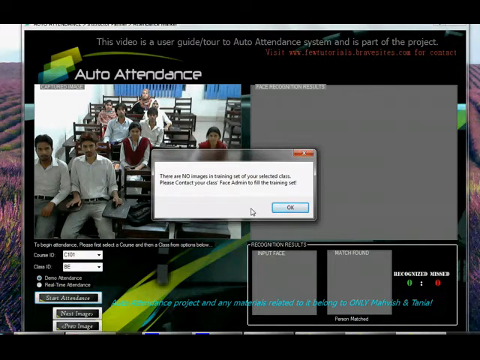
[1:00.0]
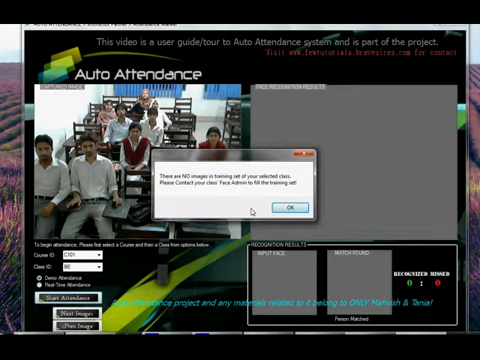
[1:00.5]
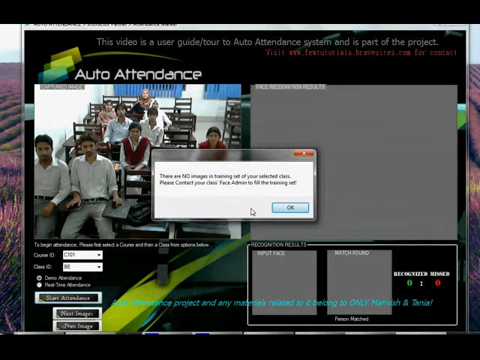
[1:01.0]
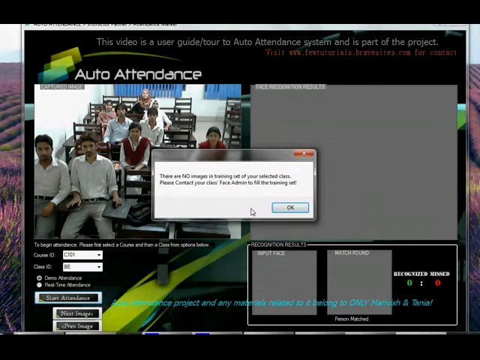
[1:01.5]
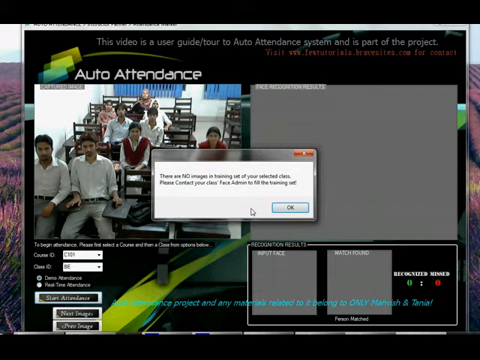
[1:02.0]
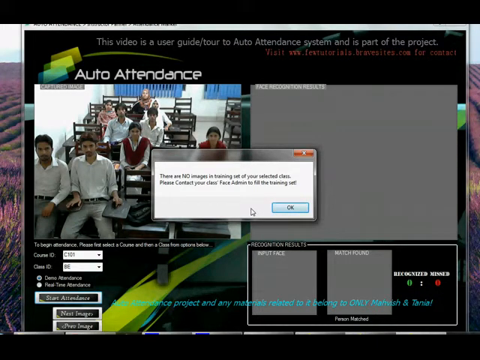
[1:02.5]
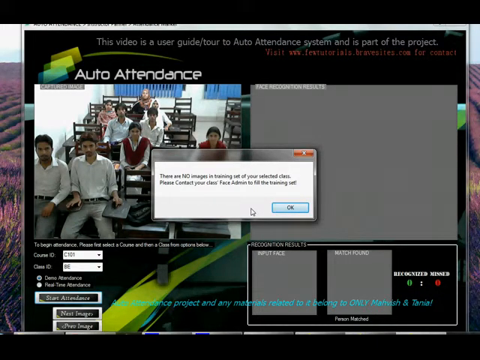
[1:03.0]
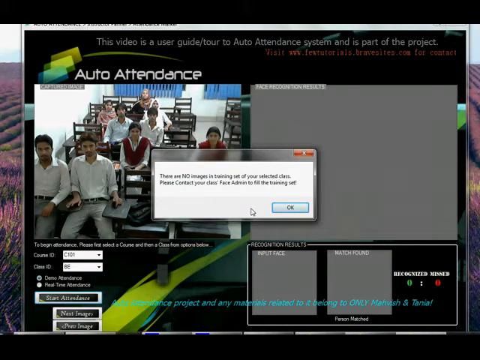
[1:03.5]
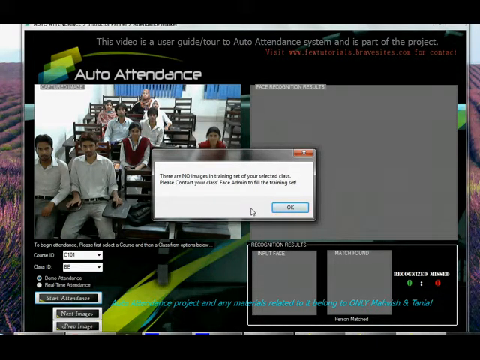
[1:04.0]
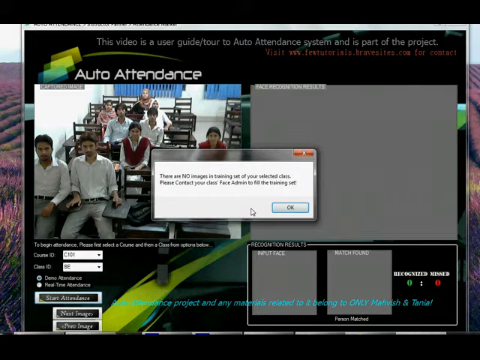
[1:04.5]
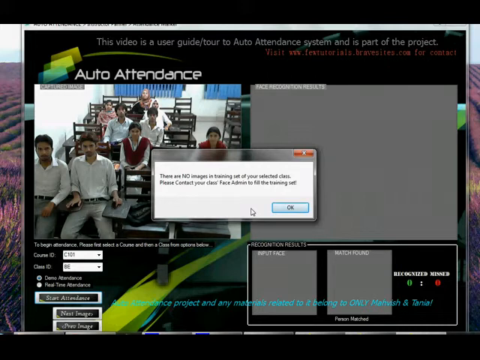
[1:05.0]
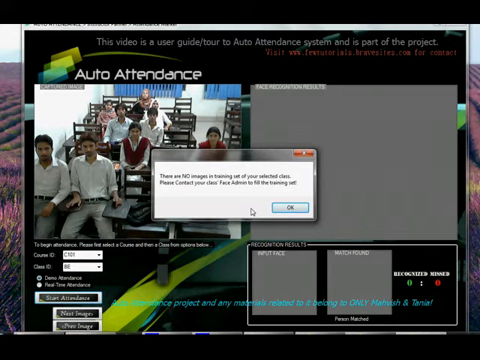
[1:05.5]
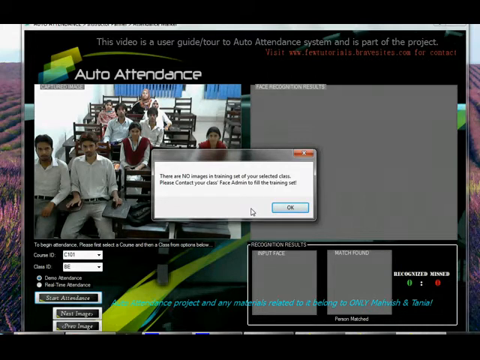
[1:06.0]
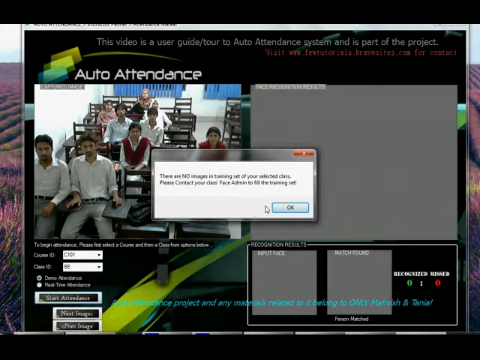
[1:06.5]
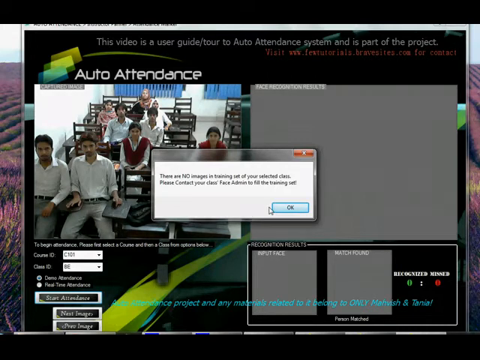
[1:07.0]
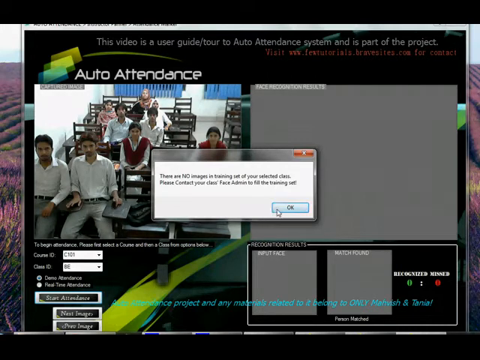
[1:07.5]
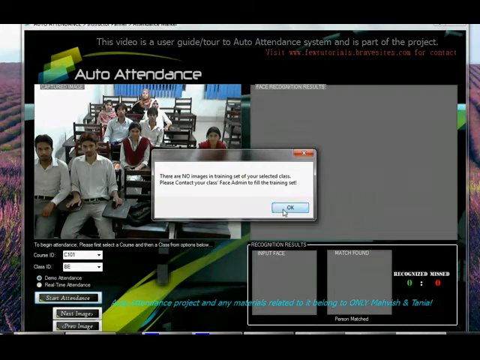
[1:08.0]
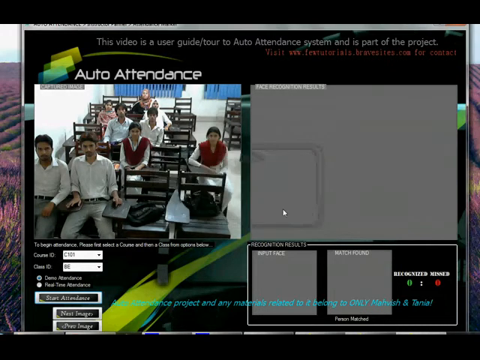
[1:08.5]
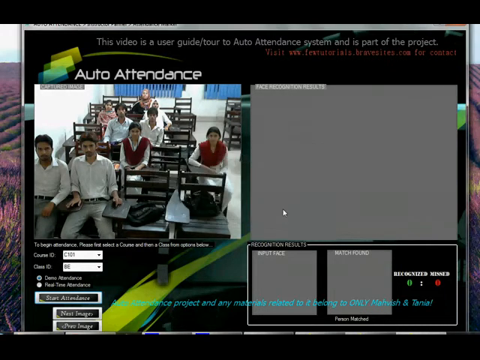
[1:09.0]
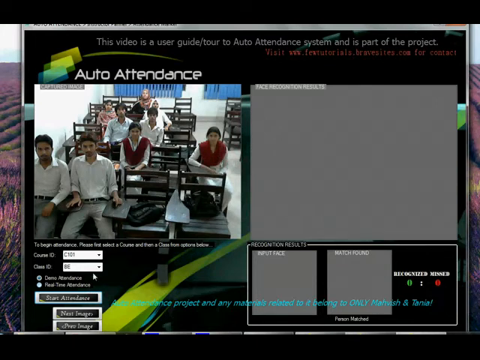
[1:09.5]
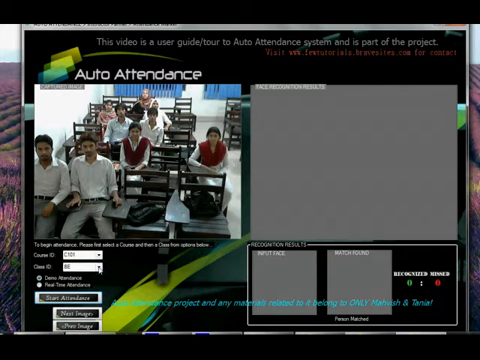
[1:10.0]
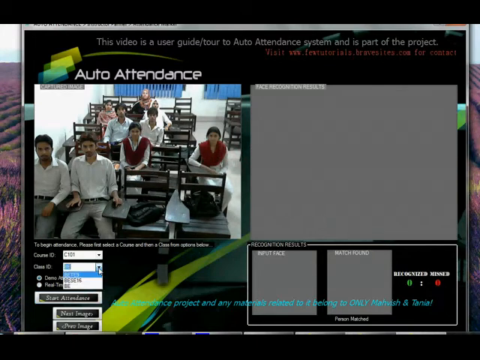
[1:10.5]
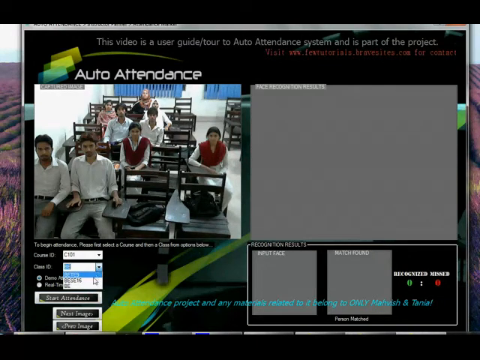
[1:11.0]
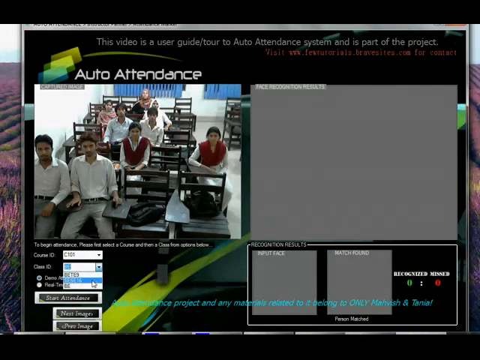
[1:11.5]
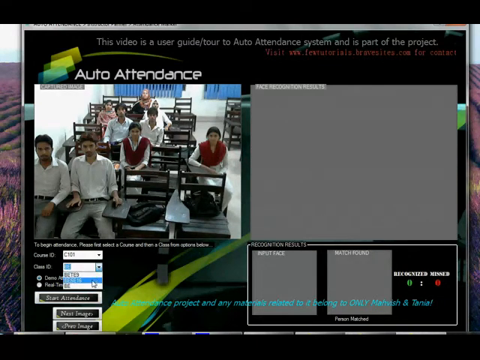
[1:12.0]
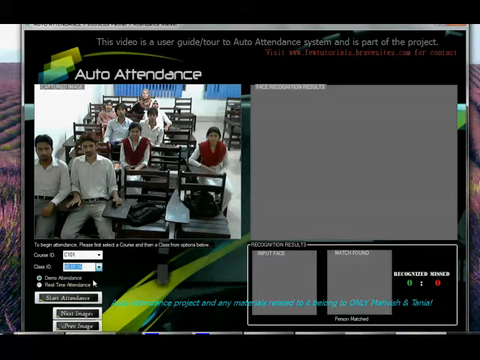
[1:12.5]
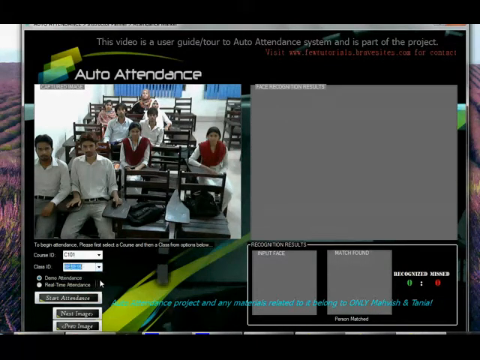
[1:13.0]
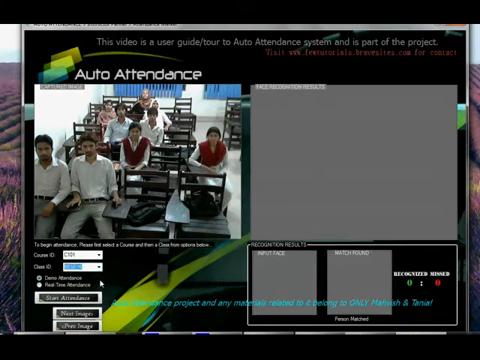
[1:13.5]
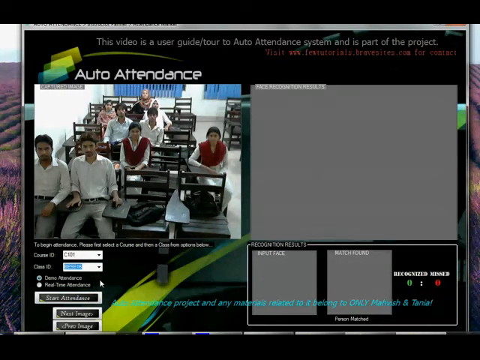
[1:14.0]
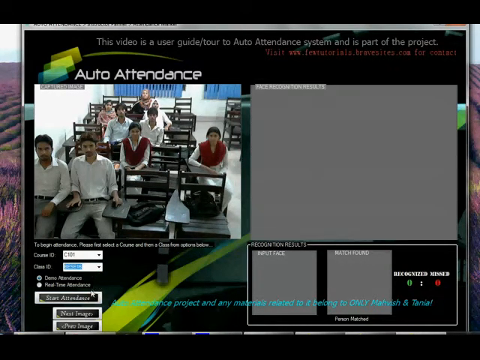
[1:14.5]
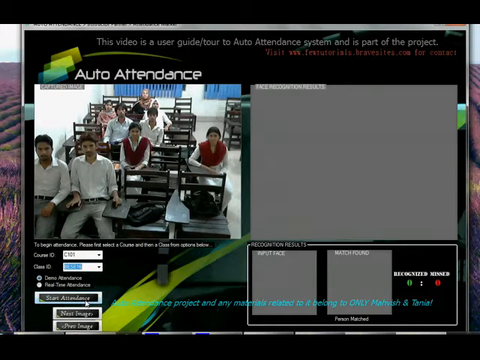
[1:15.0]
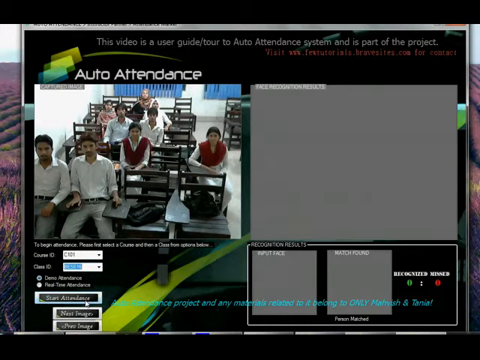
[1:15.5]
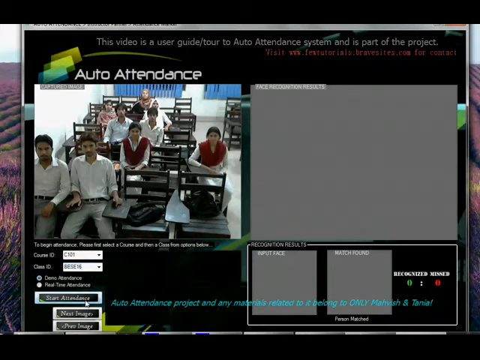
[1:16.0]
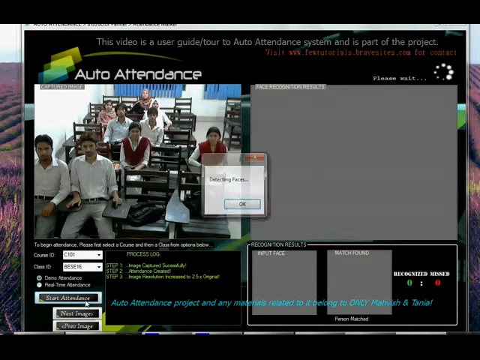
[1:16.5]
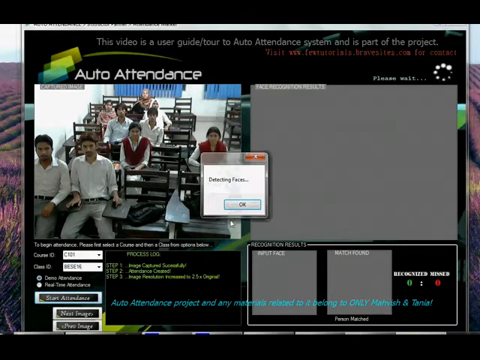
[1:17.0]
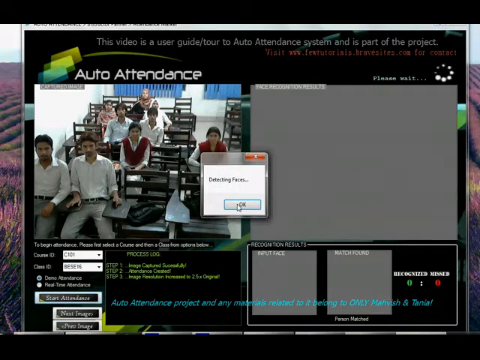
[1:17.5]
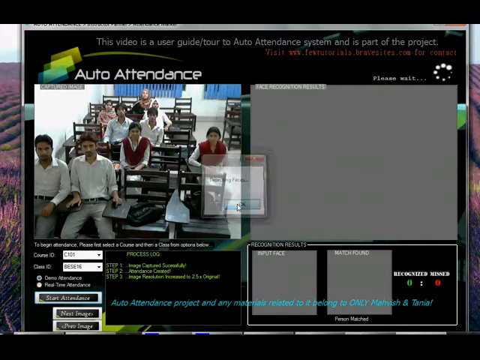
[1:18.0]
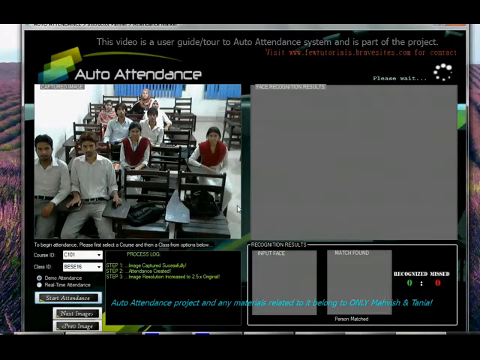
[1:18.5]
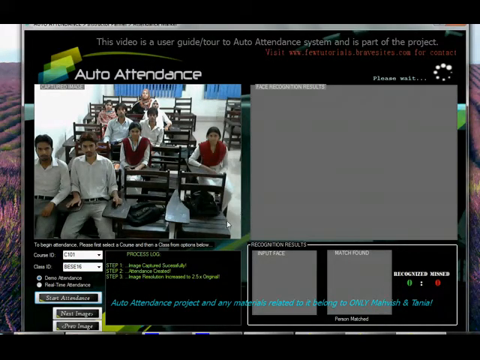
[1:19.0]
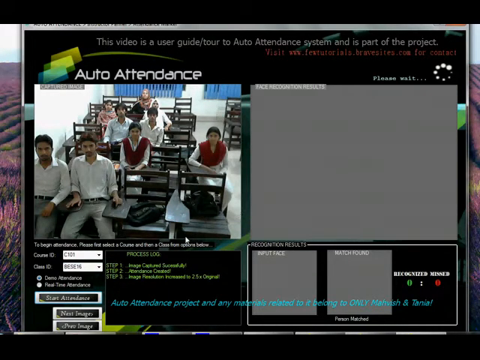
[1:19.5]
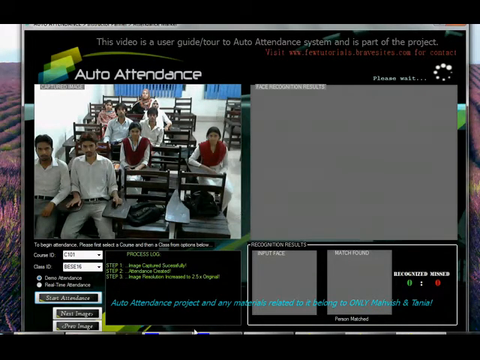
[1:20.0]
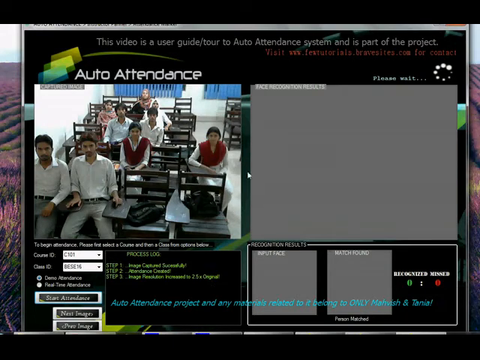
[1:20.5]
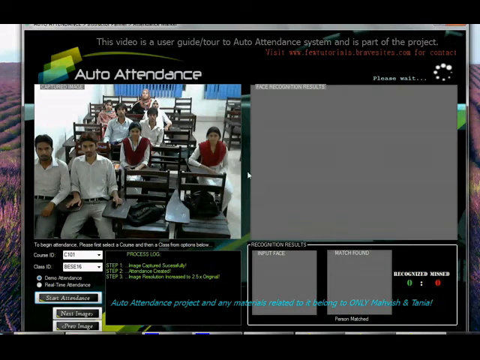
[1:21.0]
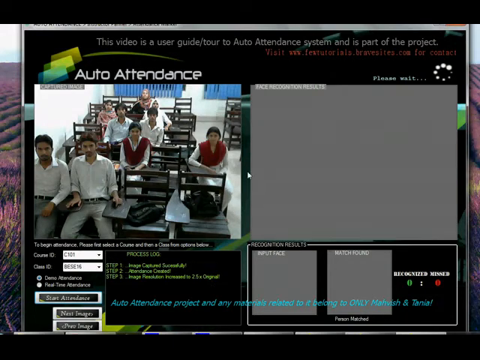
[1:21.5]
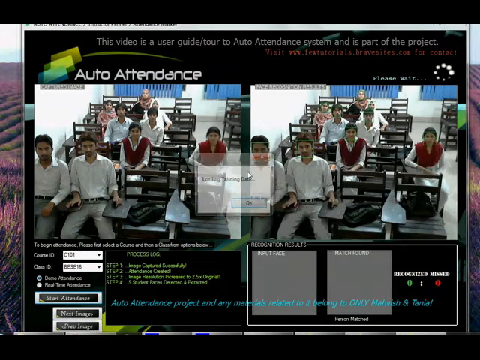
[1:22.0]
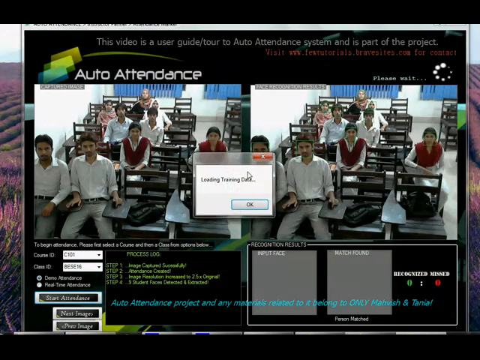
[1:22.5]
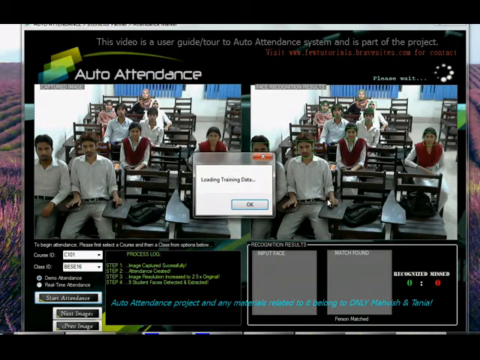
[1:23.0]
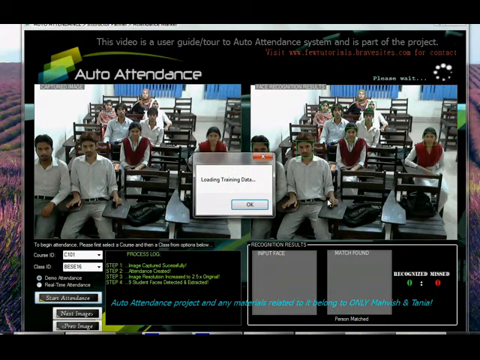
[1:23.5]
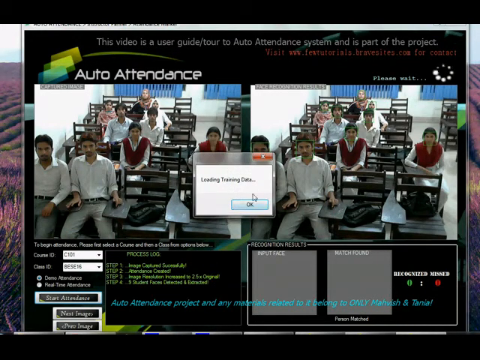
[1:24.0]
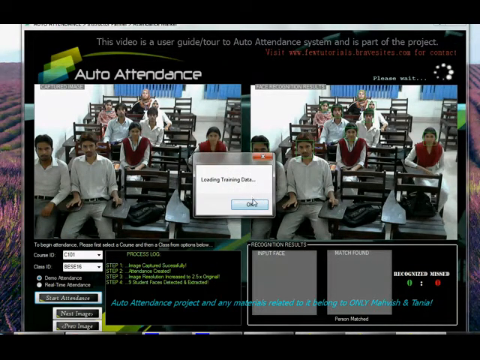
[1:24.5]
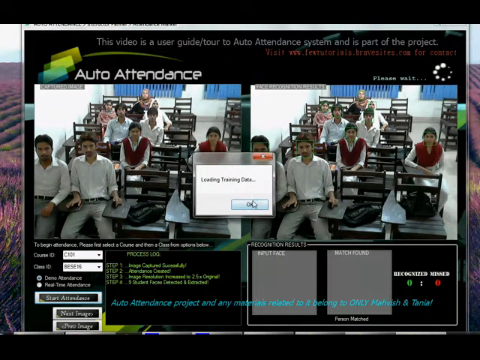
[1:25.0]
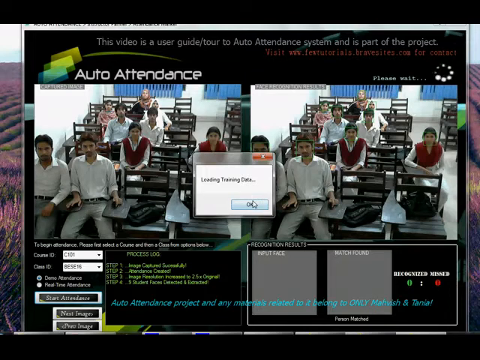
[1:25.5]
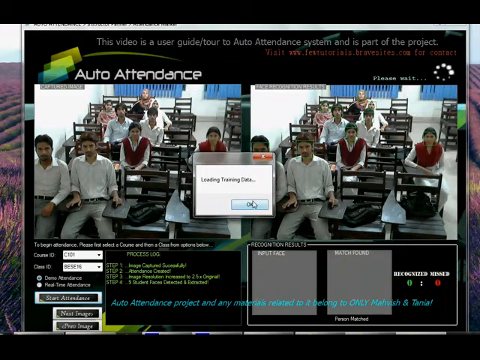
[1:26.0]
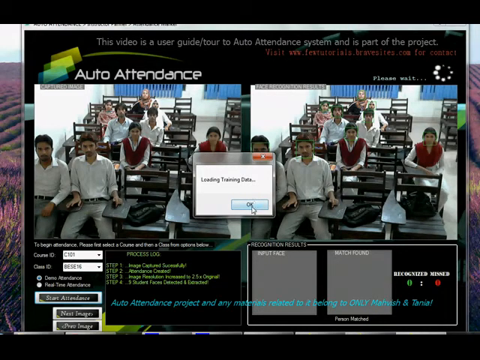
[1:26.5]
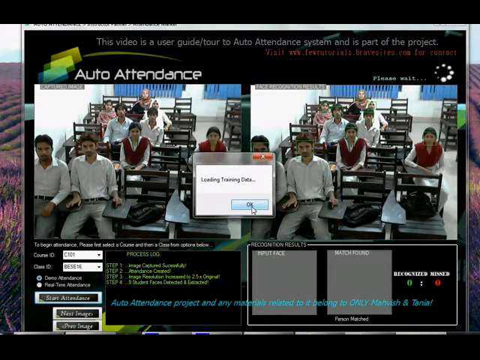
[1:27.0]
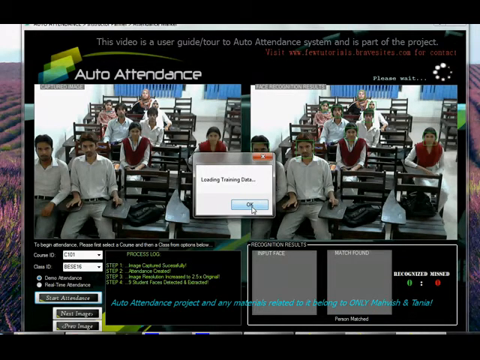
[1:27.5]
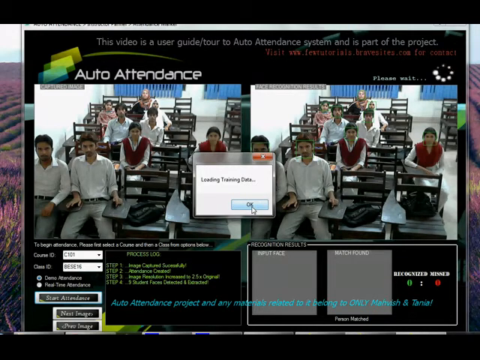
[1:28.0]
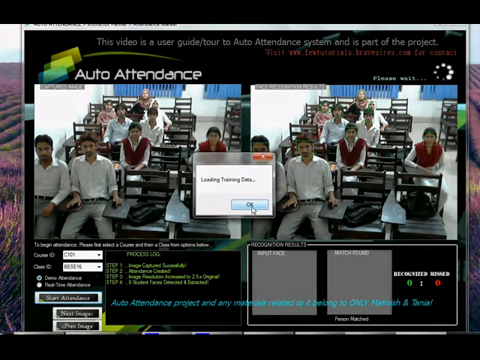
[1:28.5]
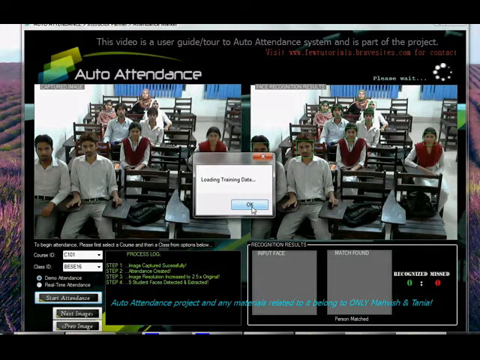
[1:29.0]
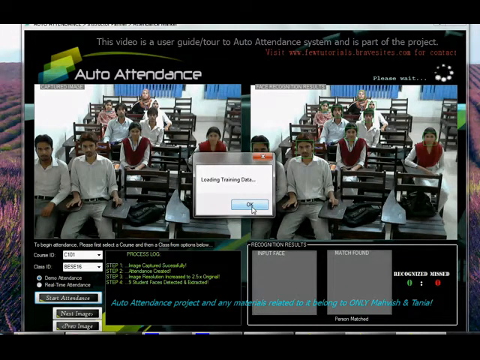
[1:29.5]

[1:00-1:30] The pop-up saying there are no images is still on the screen, and there looks to be an image on one side. He moves up to the OK button and clicks it, then goes back to what seem to be IDs, selecting certain numbers from the box. He goes down to "start attendance" and detects faces, apparently trying to detect the faces of the people sitting in the chairs. Something seems to be loading, possibly training data. The system apparently monitors whether people have arrived at something, maybe an online training. The people are looking at the camera, almost as if they were told to.